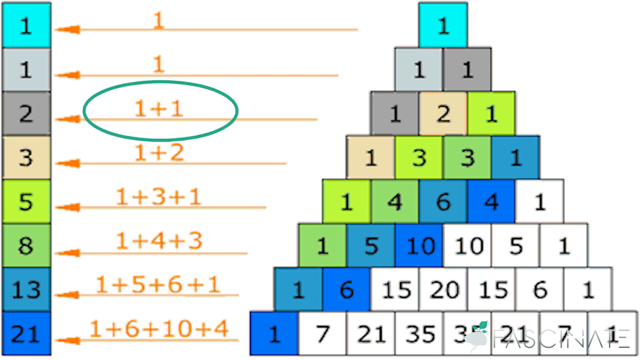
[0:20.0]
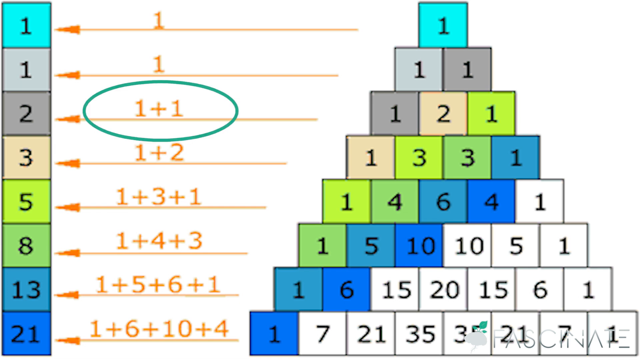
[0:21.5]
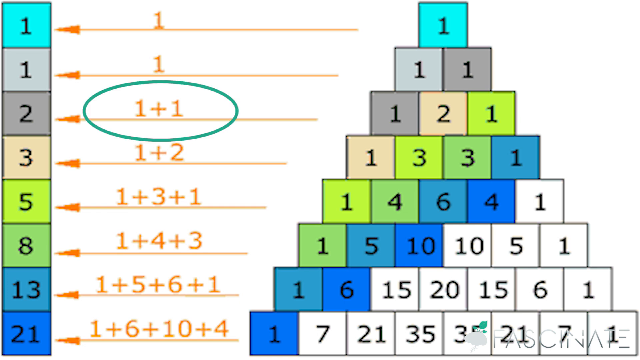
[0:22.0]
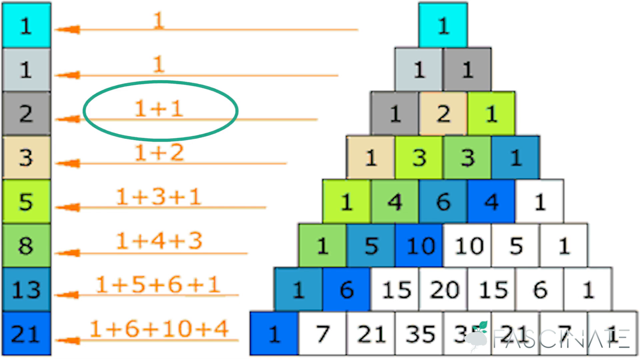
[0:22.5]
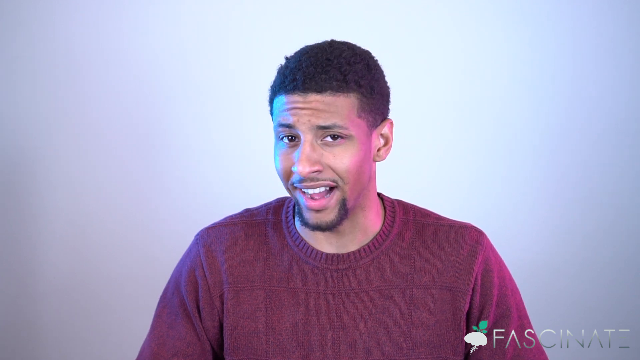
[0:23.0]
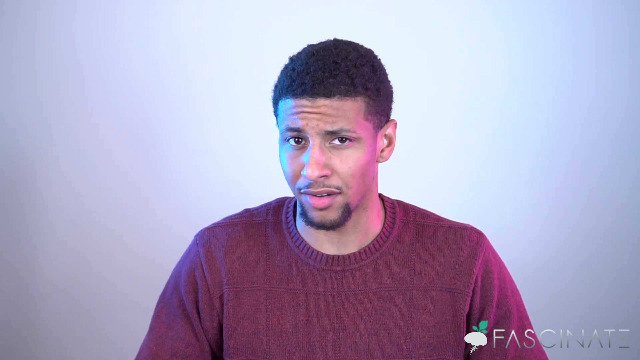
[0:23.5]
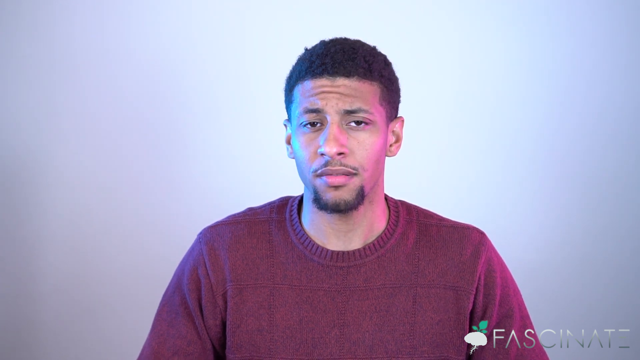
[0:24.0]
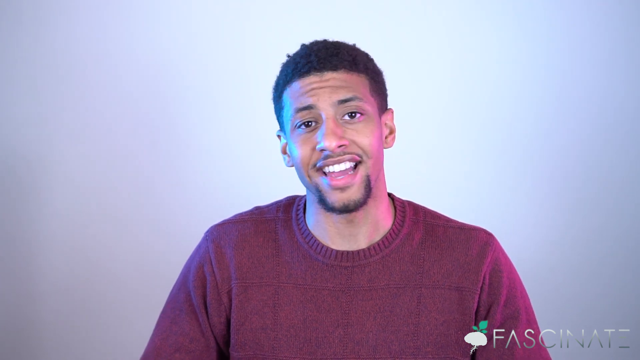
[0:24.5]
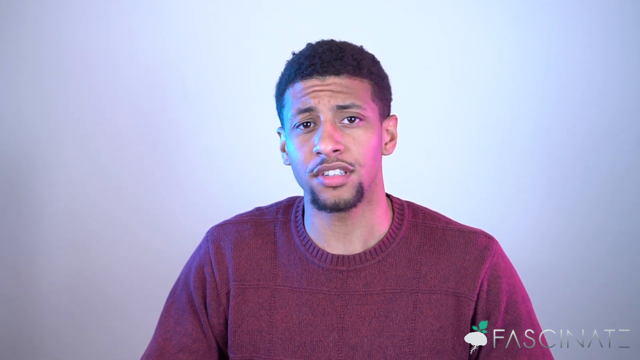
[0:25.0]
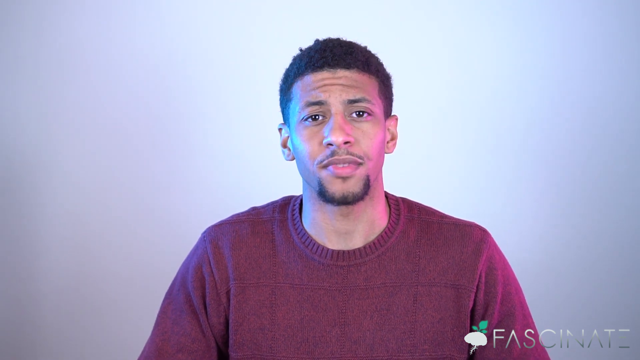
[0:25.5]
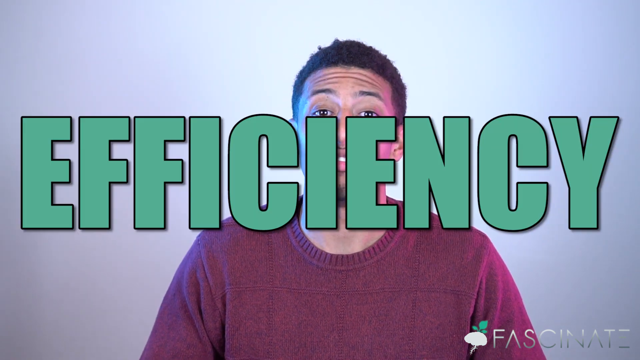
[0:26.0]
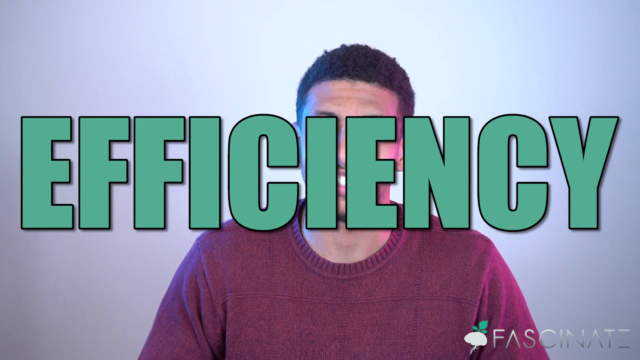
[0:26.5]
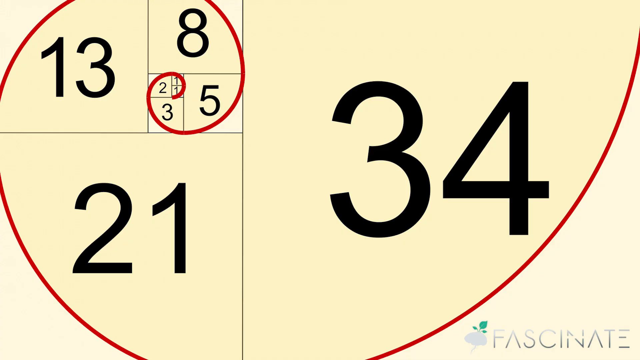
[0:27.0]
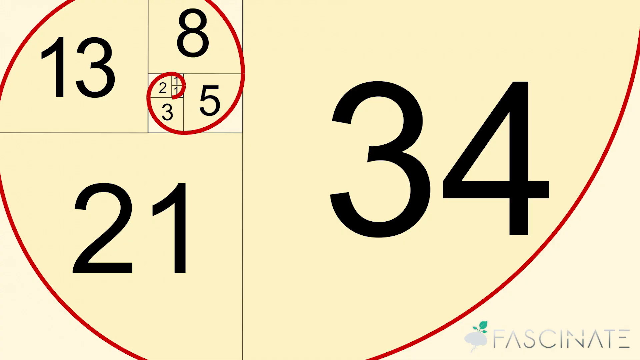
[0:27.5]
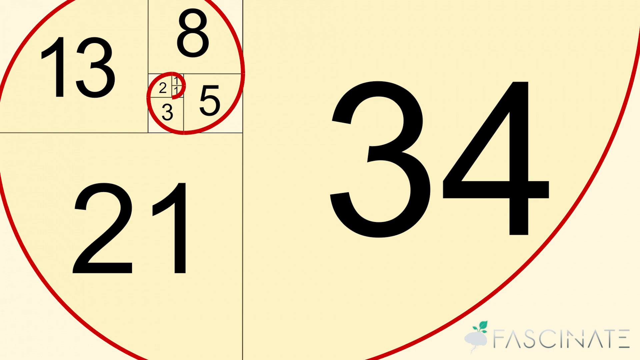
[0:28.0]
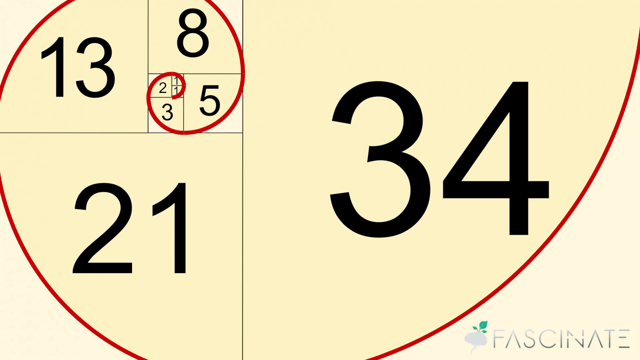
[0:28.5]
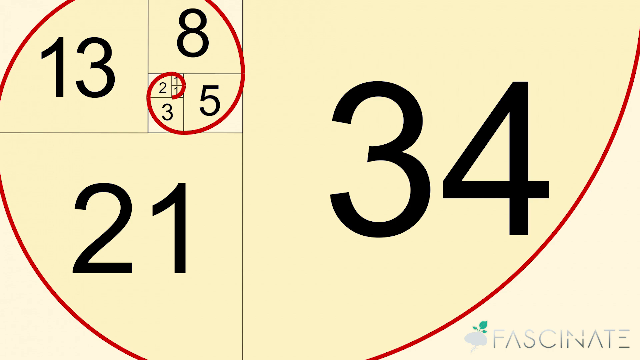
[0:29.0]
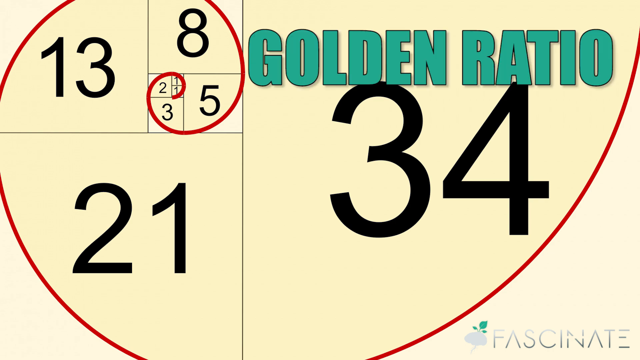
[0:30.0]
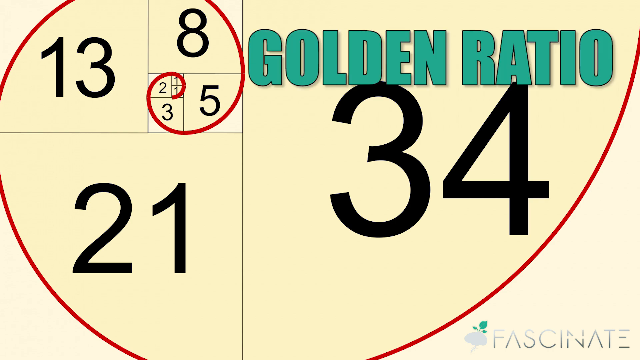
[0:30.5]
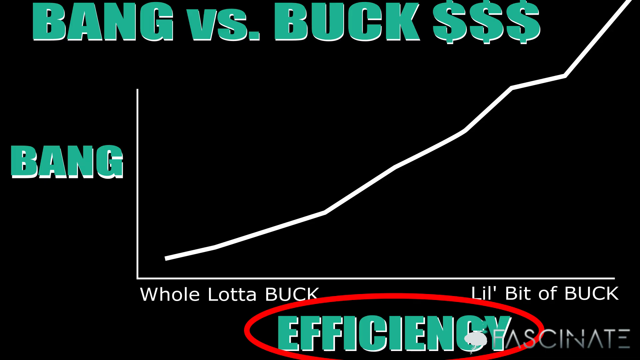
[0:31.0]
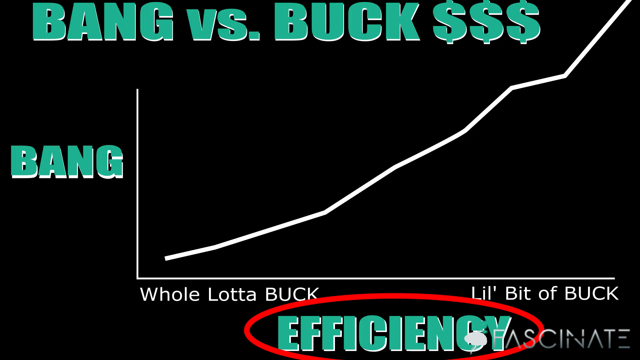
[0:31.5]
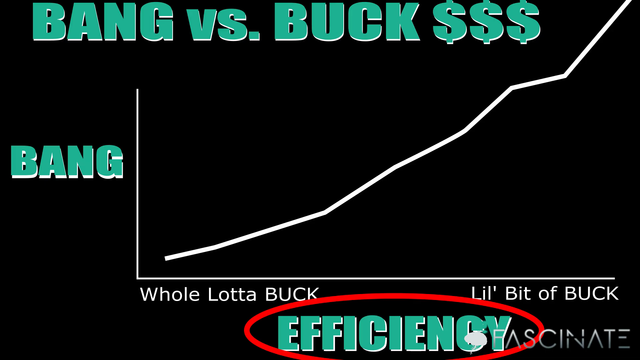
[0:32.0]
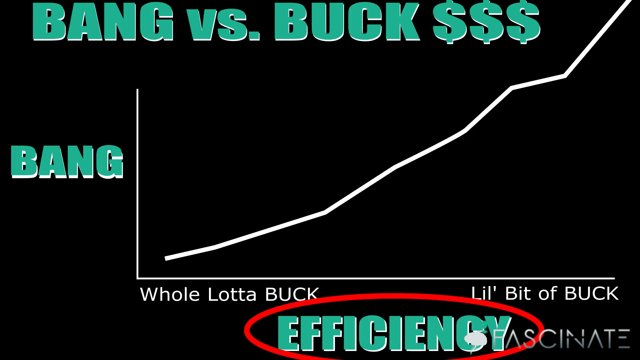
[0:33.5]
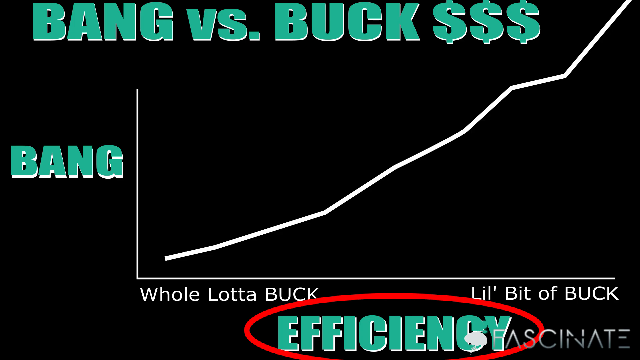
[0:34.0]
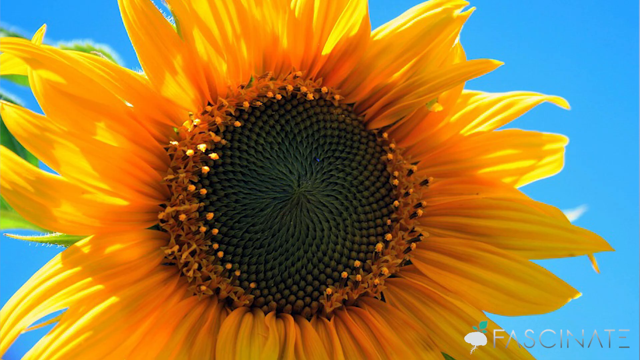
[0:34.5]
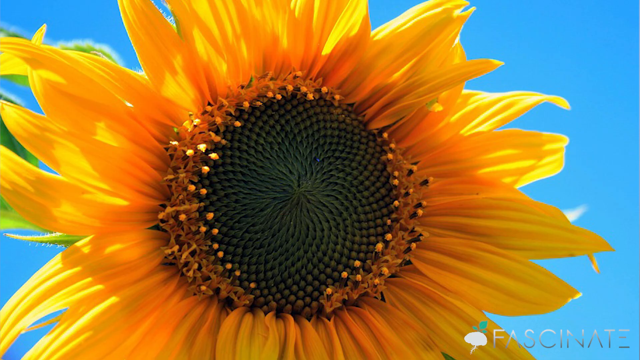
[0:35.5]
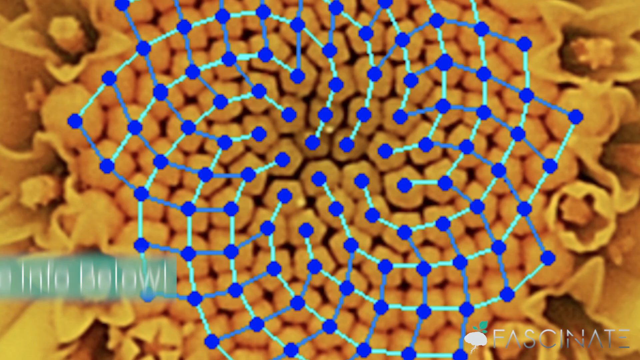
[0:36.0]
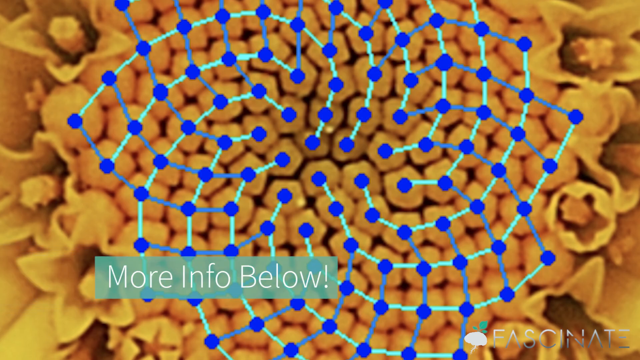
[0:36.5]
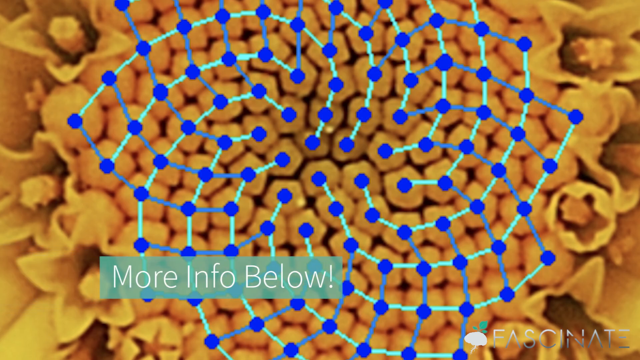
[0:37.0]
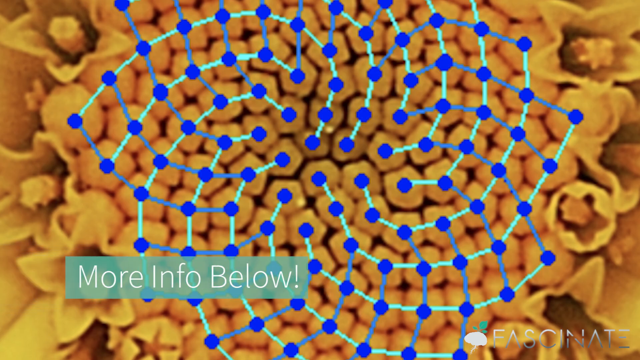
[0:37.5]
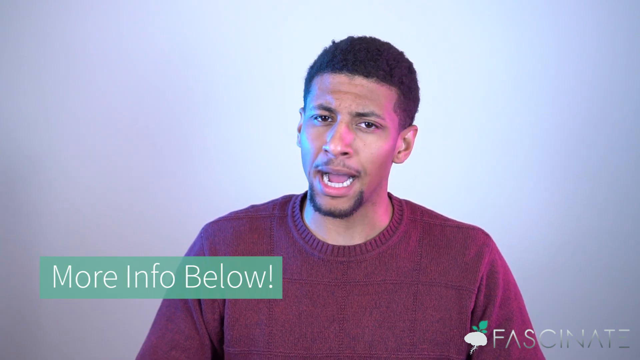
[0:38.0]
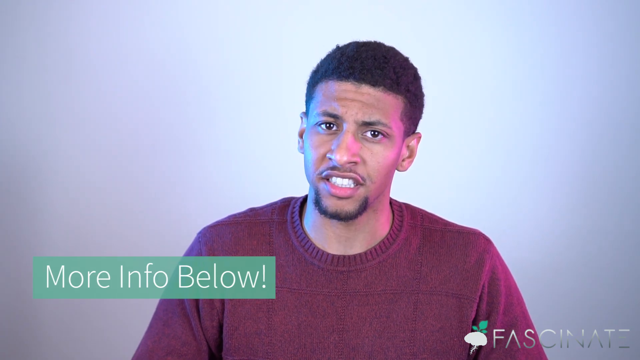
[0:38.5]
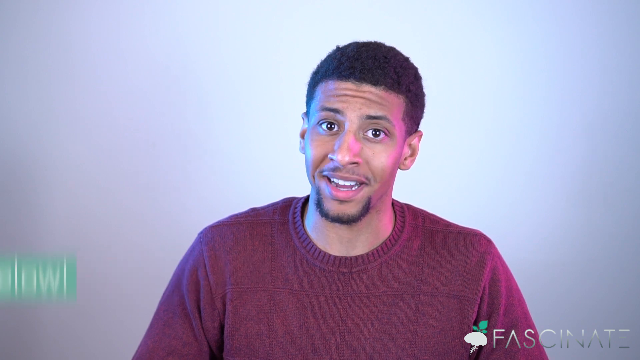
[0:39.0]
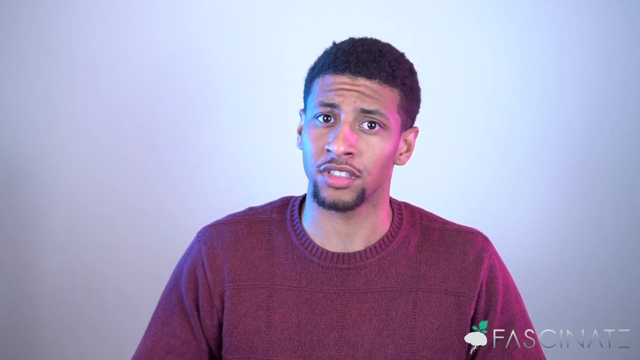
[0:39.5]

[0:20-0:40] With the 1 +1 option circled, the man appears on screen continuing to talk. The word "EFFICIENCY" pops up in all uppercase letters, overlaying his image. An example of the golden ratio follows: small squares of different sizes with numbers in them, radiating out in a counterclockwise nautilus-like pattern with the numbers getting bigger and bigger. A pop-up in uppercase letters shows "GOLDEN RATIO". The next screen has a black background with a "BANG vs. BUCK $$$" headline with three dollar signs and a small chart with "BANG" on the y-axis and "EFFICIENCY" on the x-axis. A line extends from the lower left to the upper right, and the "EFFICIENCY" axis is circled in red. On the left side is "Whole Lotta BUCK", and on the right is "Lil' Bit of BUCK". A new image pops up of a zoomed-in sunflower. The next image appears to be even more zoomed in on that sunflower, with various points of the sunflower connected by overlaid blue dots and lines. A "More Info Below!" text box appears, oscillating side to side before disappearing off the left side of the screen. The video returns to the man speaking.